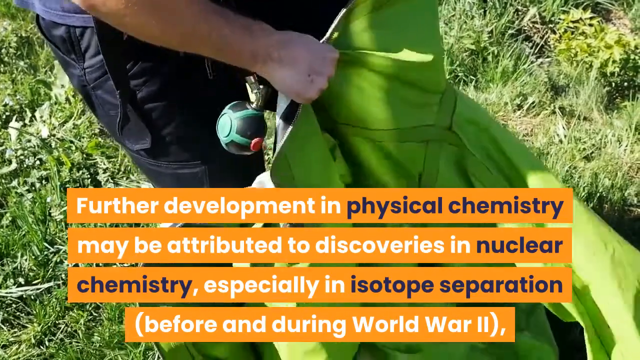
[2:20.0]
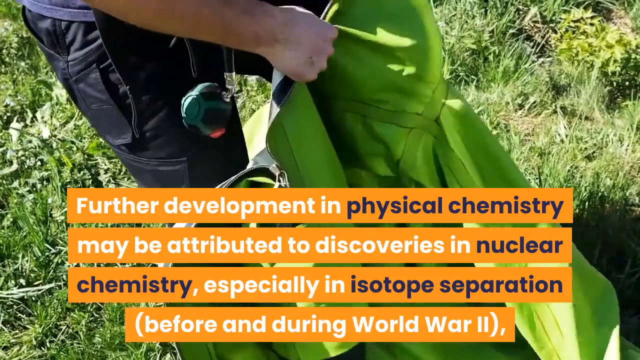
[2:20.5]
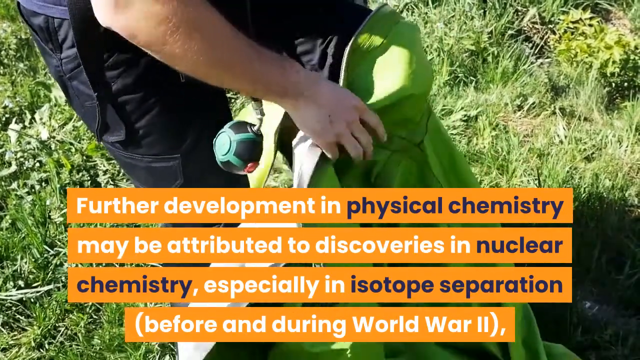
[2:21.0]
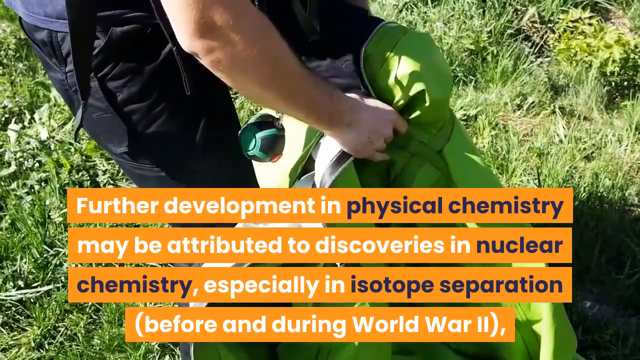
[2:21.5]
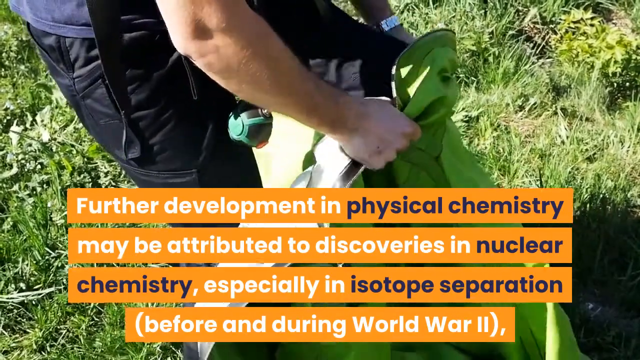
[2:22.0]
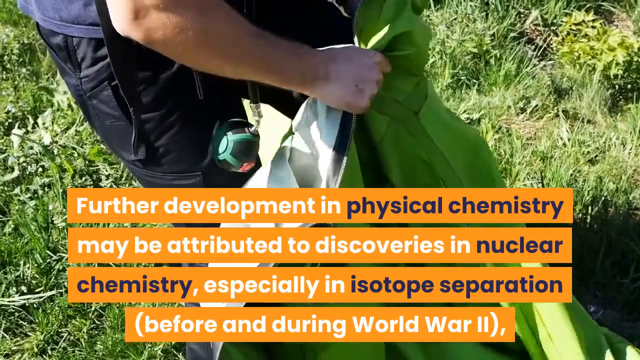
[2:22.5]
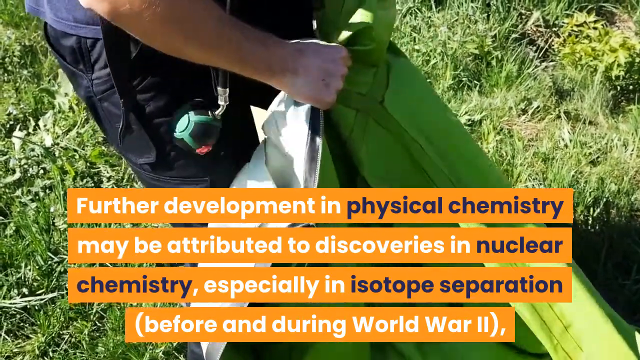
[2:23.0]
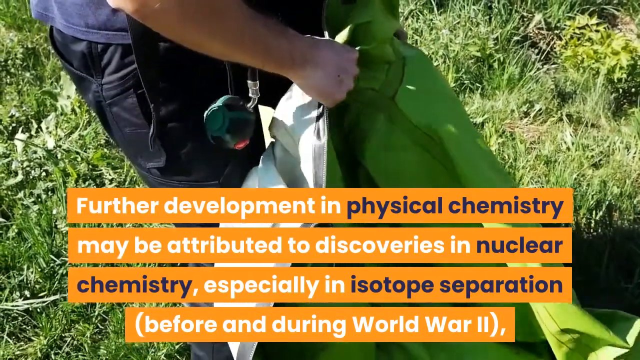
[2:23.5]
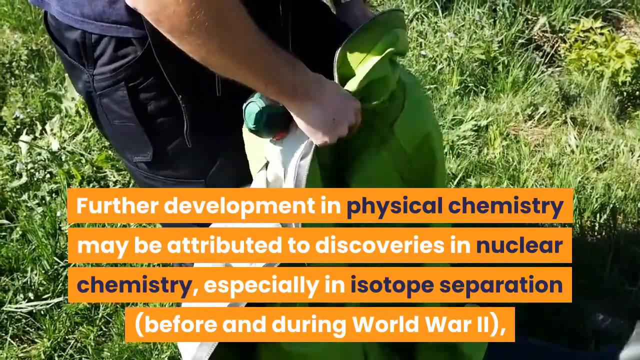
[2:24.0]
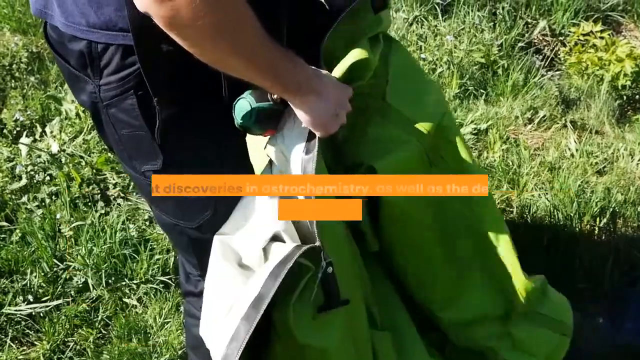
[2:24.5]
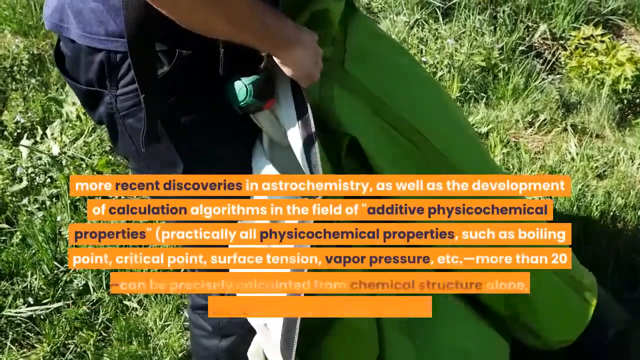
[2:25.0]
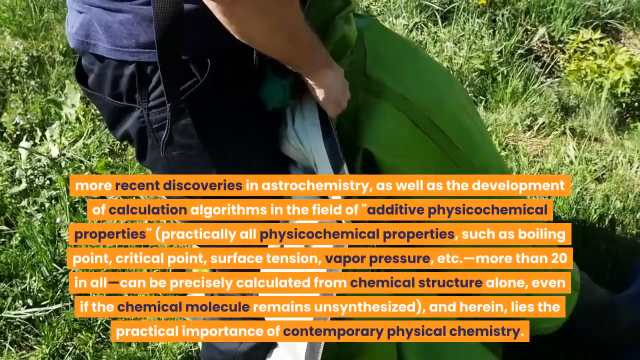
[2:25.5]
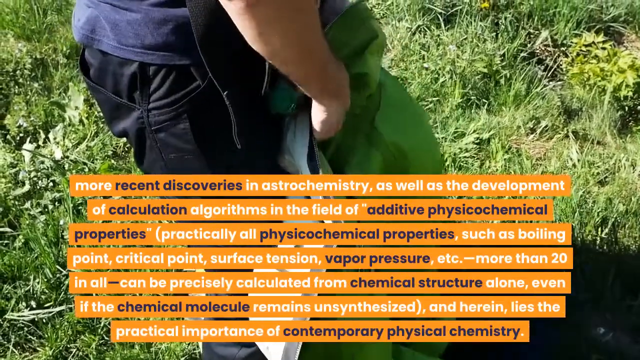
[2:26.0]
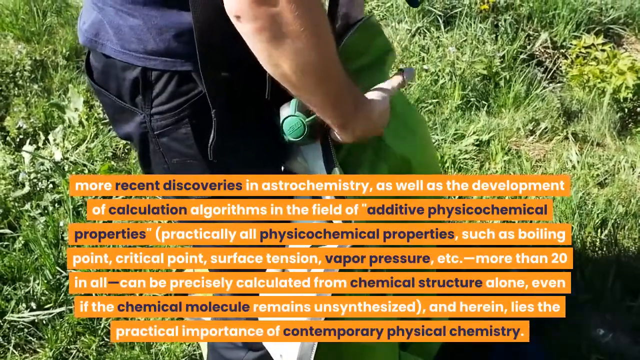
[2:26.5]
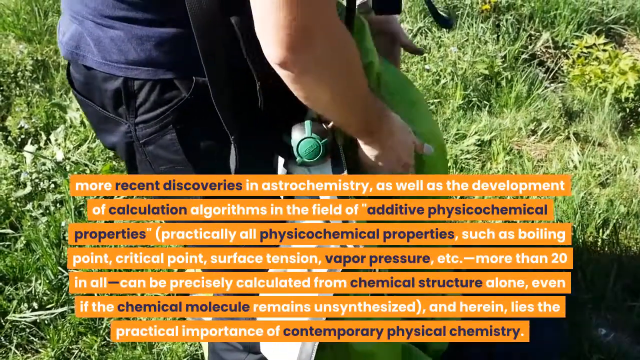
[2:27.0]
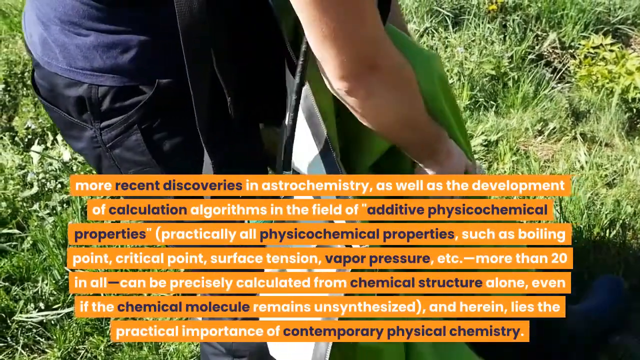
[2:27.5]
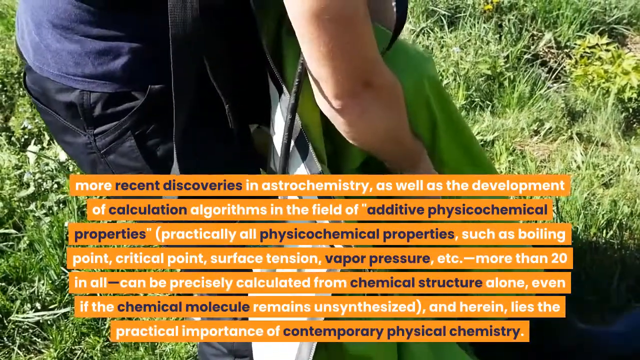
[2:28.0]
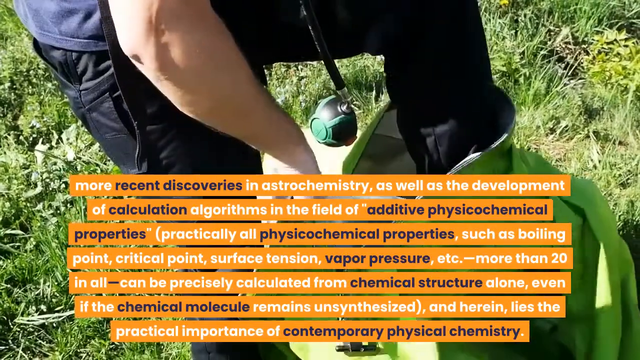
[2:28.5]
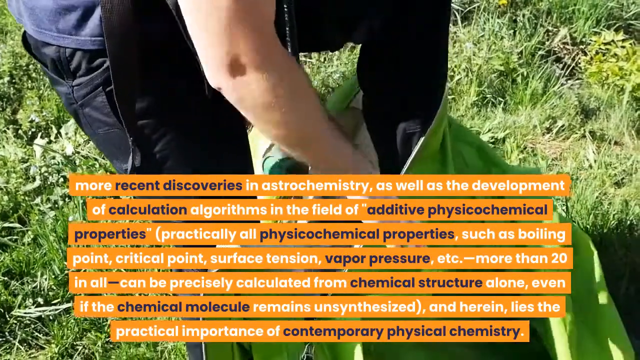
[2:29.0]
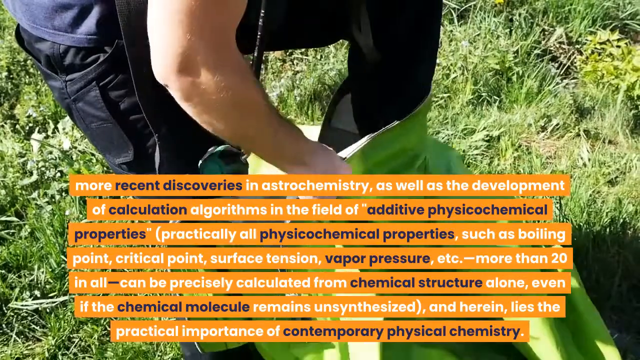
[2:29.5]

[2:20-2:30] A person holds a green cloth object in their hand while standing outside on a grassy field or lawn. The caption reads that further developments in physical chemistry may be attributed to discoveries in nuclear chemistry, specifically in isotope separation, before and during World War II. The green cloth object the person was fumbling with turns out to be a suit, which they are putting on like pants. The next caption describes more recent discoveries in astrochemistry and calculation algorithms in the field of additive psychochemical properties, such as boiling point, critical point, surface tension, and vapor pressure, with more than 20 in all that can be calculated from chemical structure.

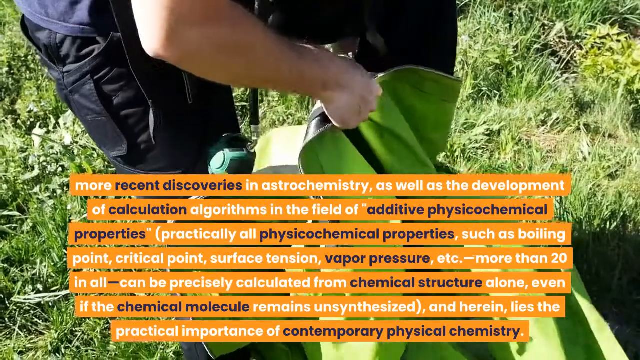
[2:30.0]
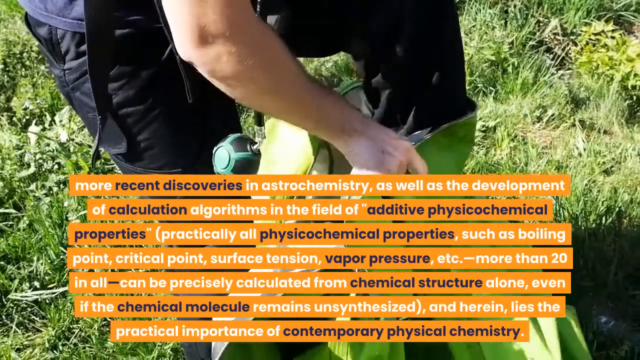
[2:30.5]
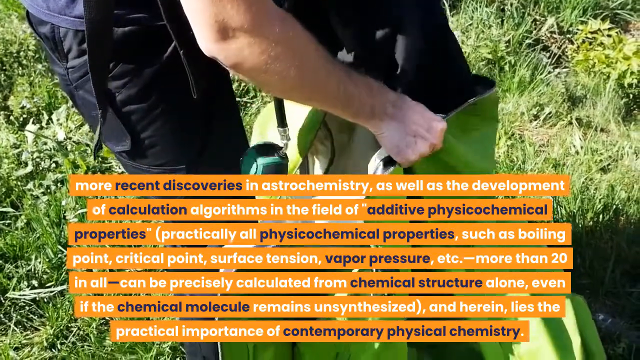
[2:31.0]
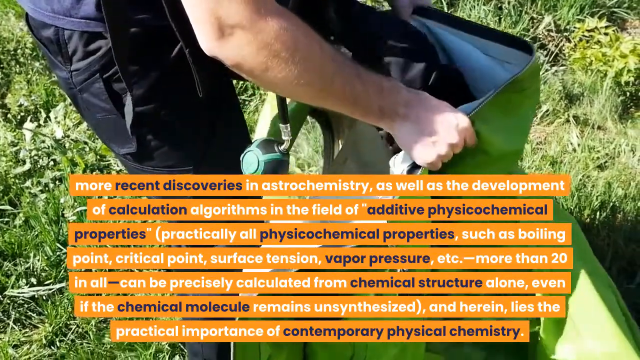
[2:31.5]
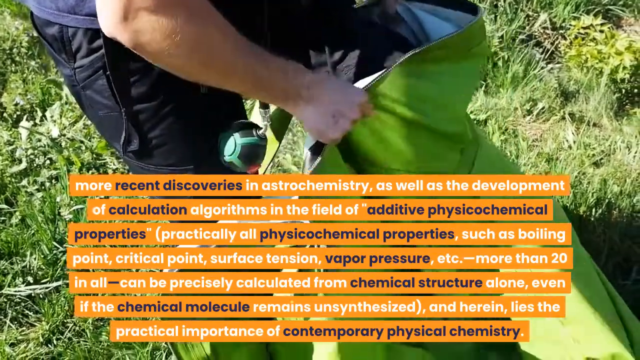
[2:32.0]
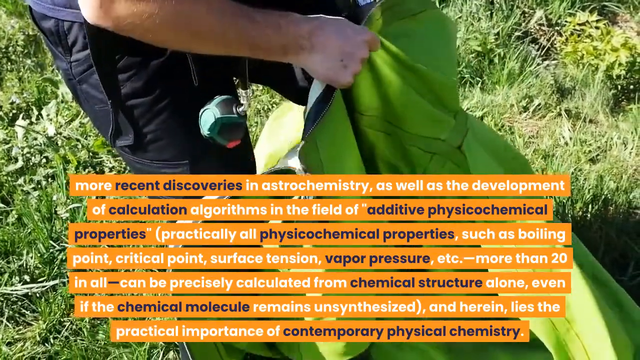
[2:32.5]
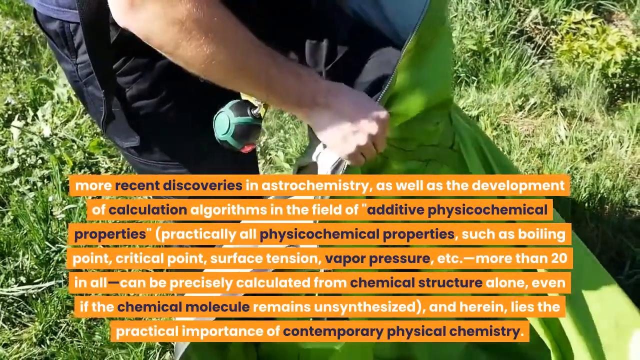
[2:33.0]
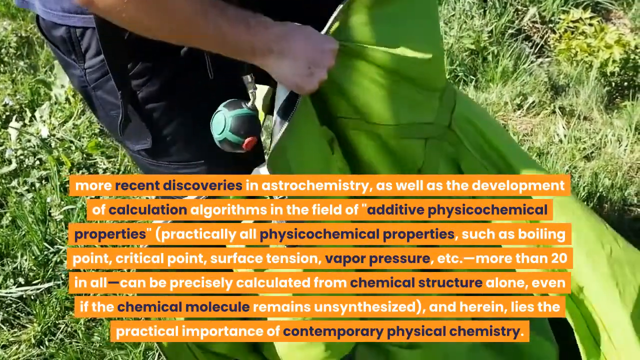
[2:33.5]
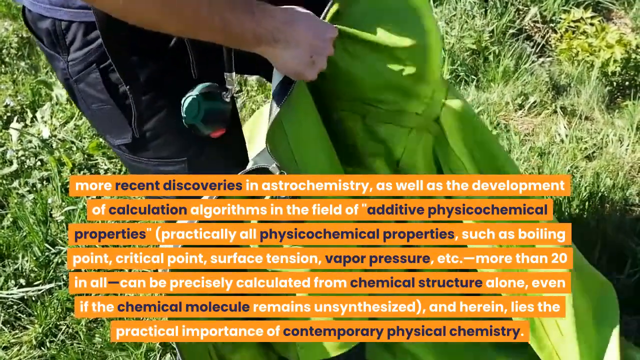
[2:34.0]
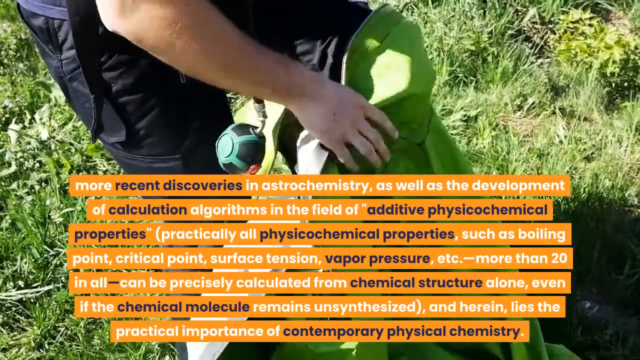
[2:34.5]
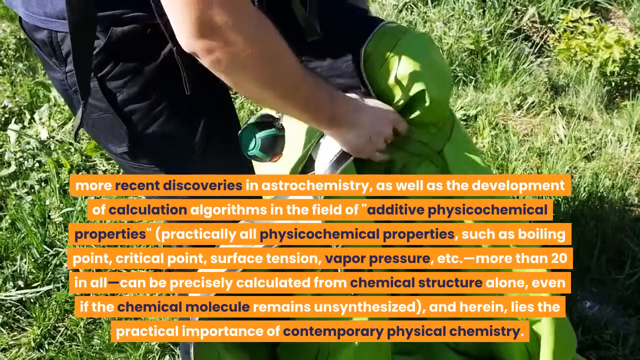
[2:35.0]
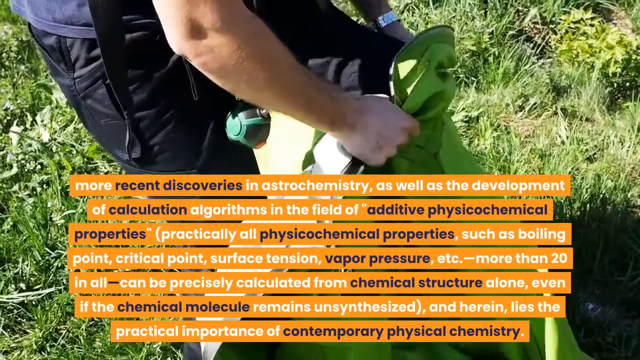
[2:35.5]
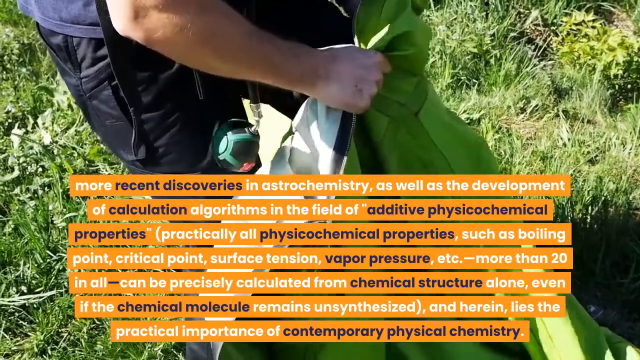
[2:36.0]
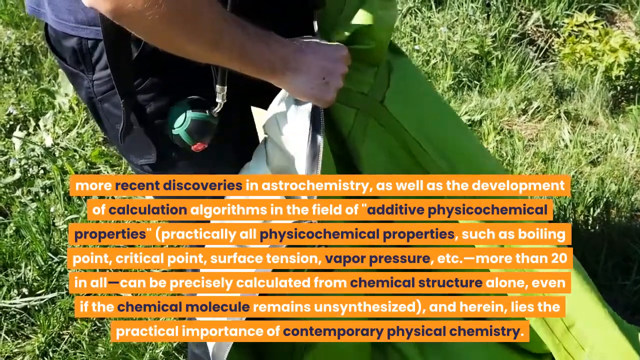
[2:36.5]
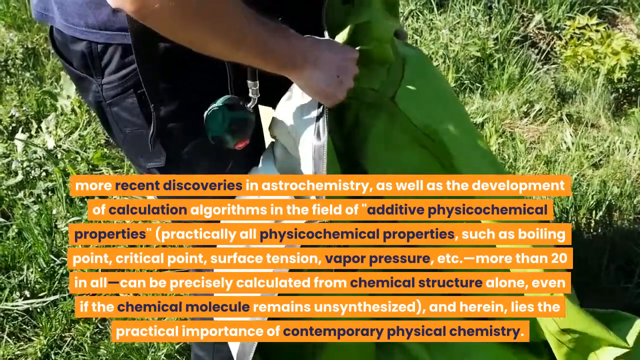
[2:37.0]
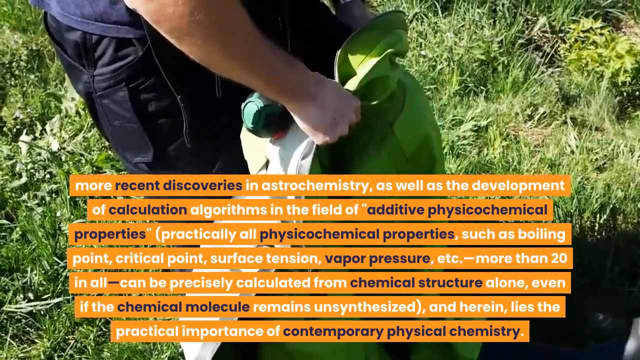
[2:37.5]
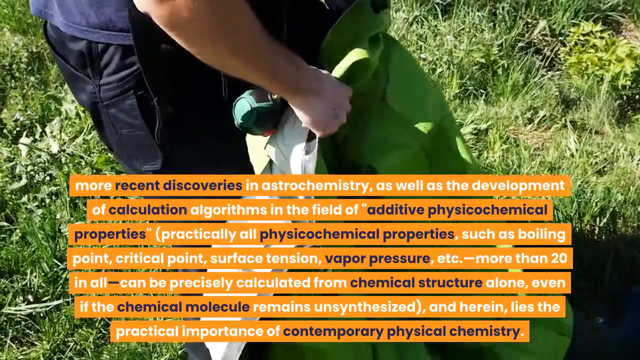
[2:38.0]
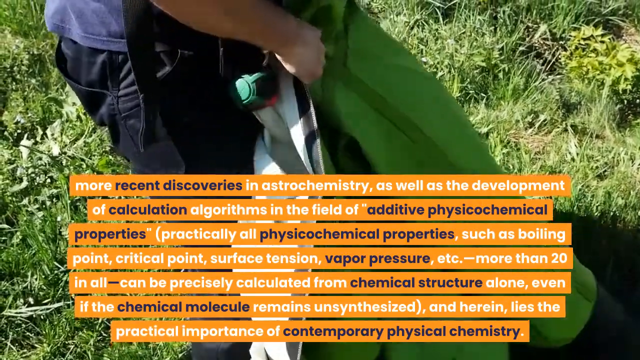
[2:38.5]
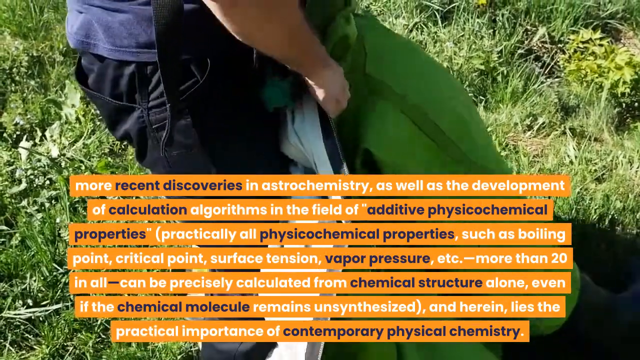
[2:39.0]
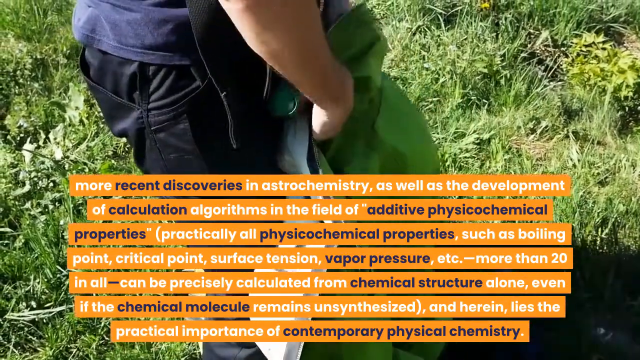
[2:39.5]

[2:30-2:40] The person adjusts their left leg inside the large green suit. They wear black pants underneath, a silver watch on their left hand, and a navy t-shirt. They stretch their left leg inside the suit, trying to get the pants up over their thigh and pull them out. The inside of the green protection suit is white fabric. A circular green and black tool hangs off the green pant suit.